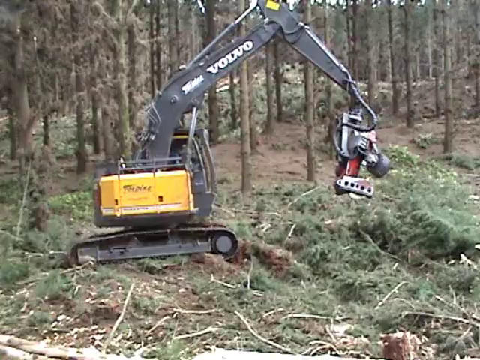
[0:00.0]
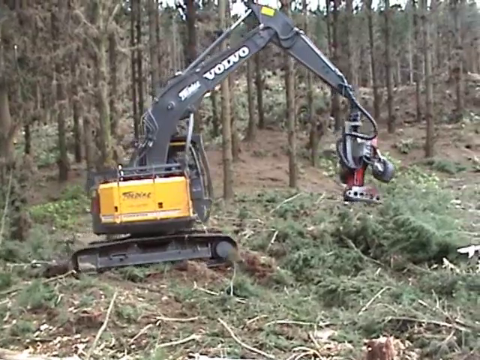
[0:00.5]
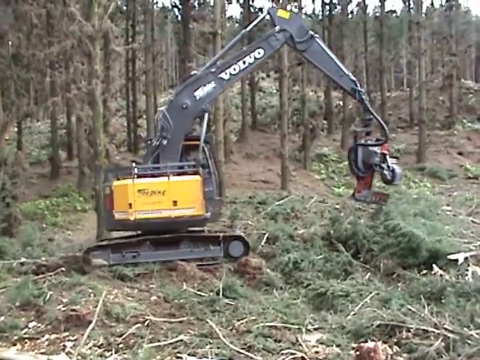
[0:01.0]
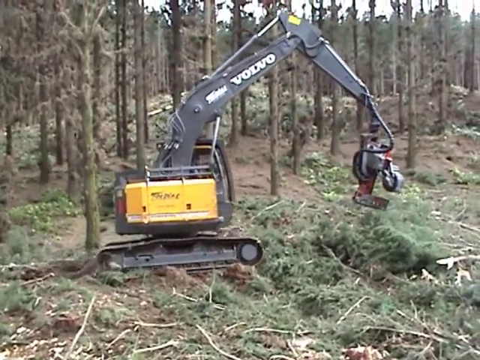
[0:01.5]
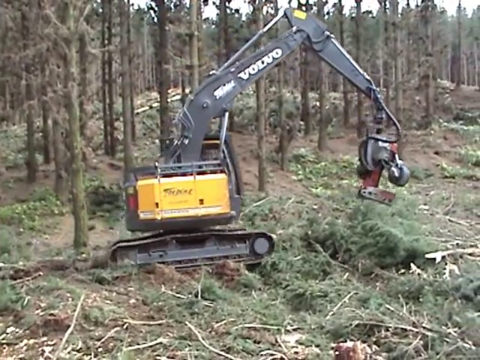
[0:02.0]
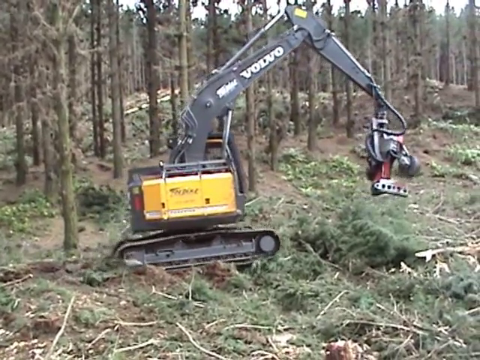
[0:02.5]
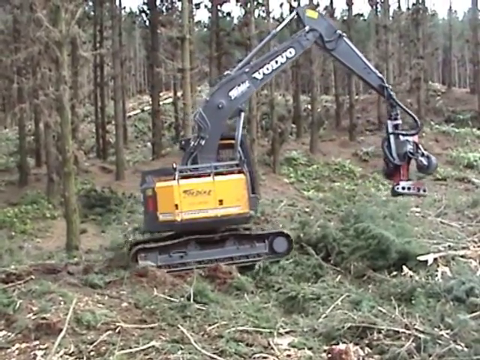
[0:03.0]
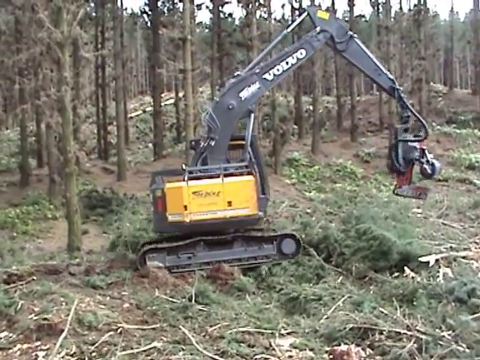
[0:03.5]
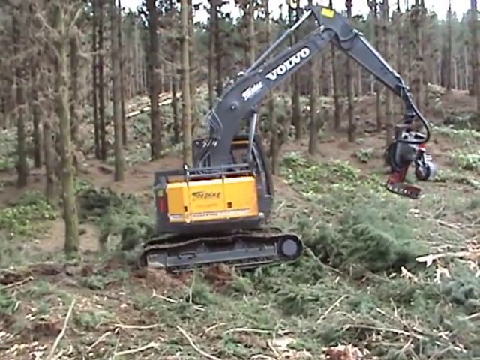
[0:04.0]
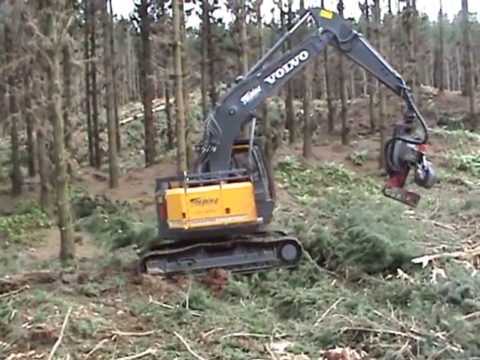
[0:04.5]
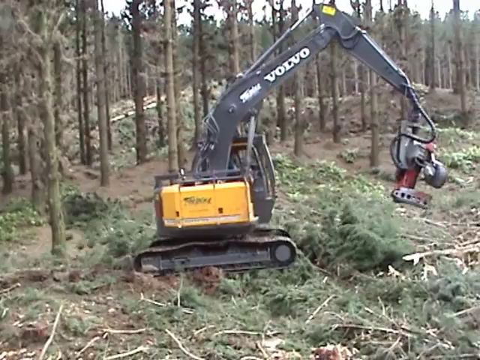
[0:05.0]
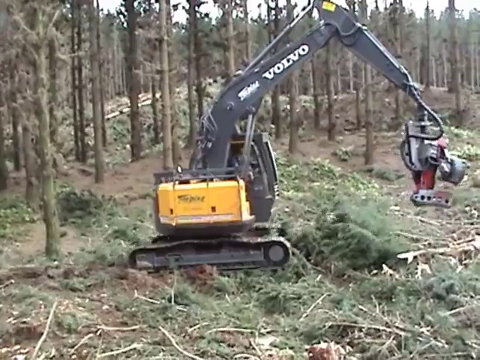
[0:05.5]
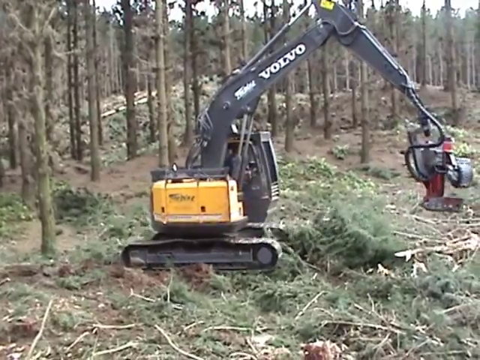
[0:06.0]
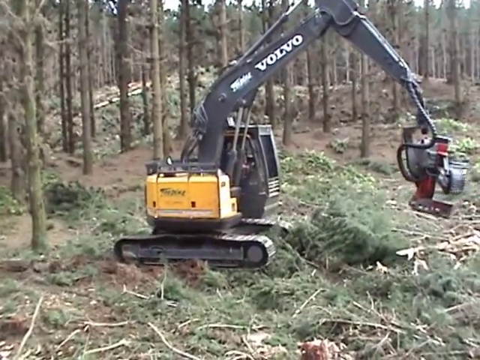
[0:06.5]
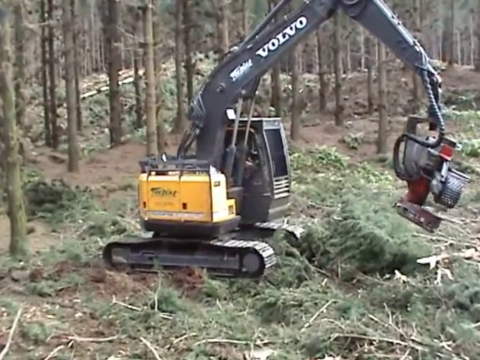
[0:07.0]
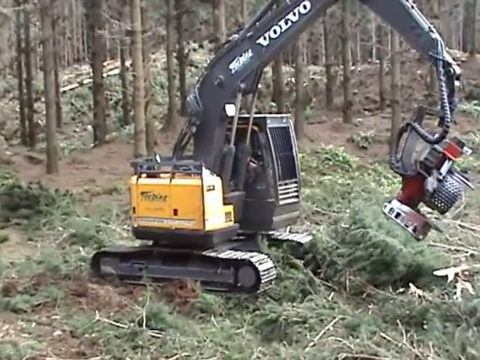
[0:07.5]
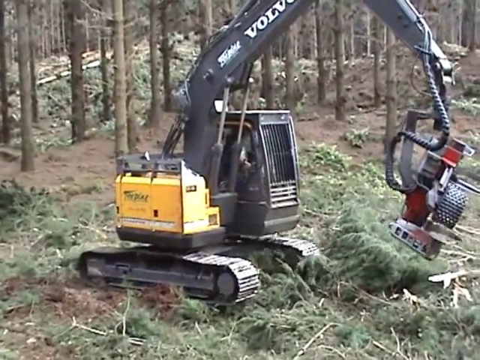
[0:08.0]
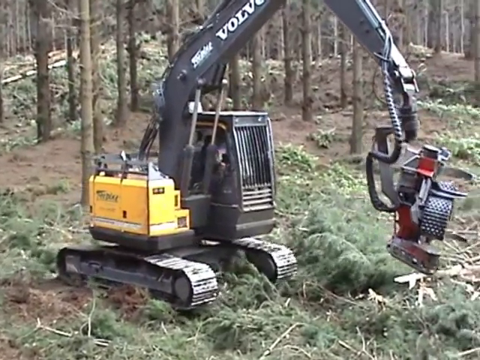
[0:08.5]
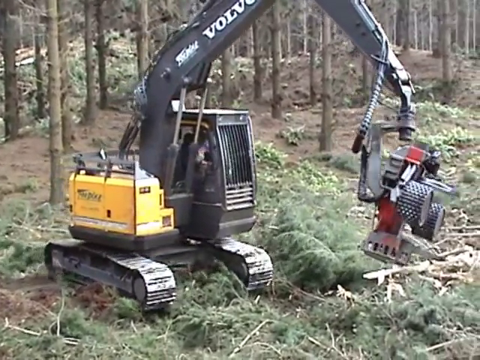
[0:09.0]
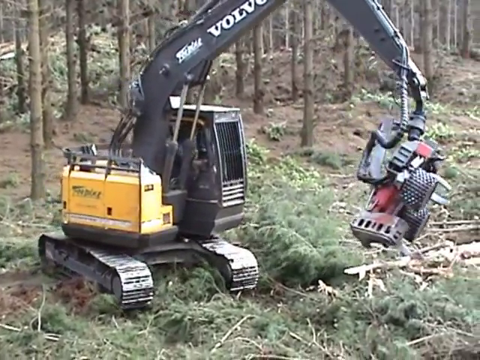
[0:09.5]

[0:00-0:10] A digger or some kind of construction equipment has a strange-looking attachment on the end of its arm, almost like a robot. It seems to have a hydraulic wire attached to it, and it has two metal arms that seem to be studded in some way. The setting is a forest with very tall trees where there has apparently been a lot of deforestation; many fallen branches and twigs are on the floor. A brand name on the arm shows the digger is a Volvo.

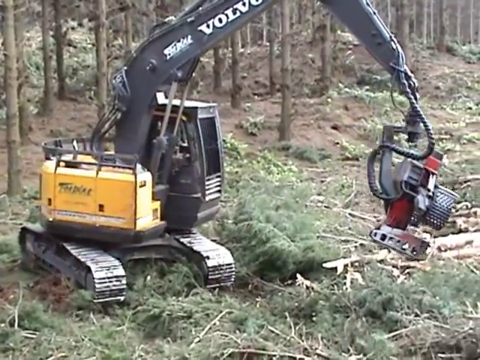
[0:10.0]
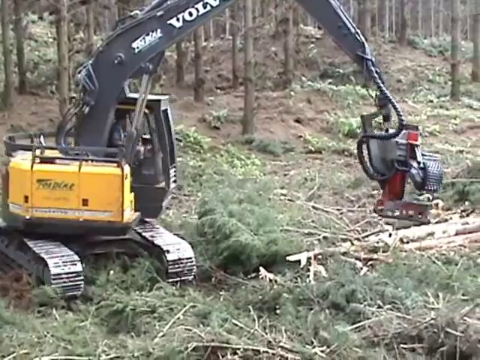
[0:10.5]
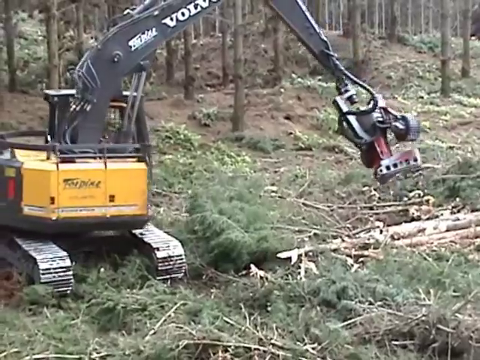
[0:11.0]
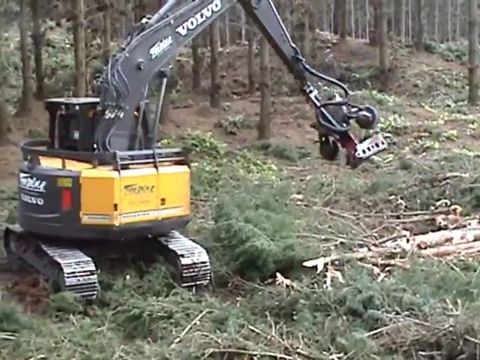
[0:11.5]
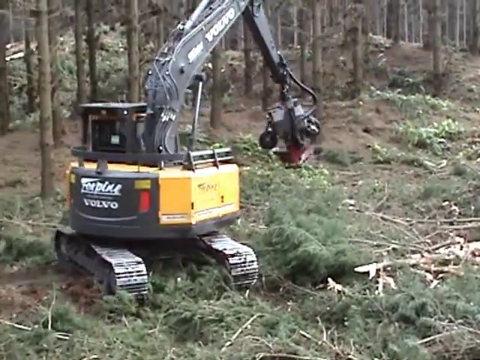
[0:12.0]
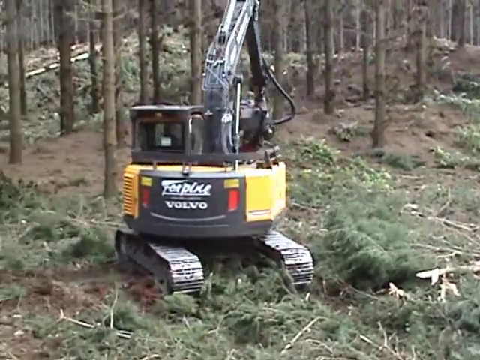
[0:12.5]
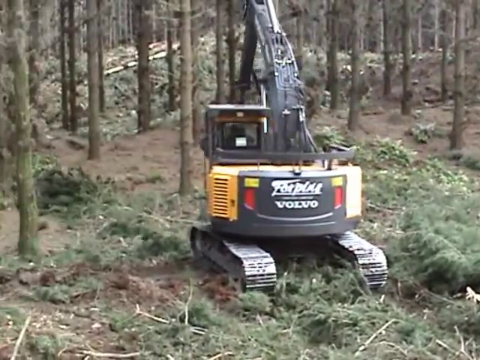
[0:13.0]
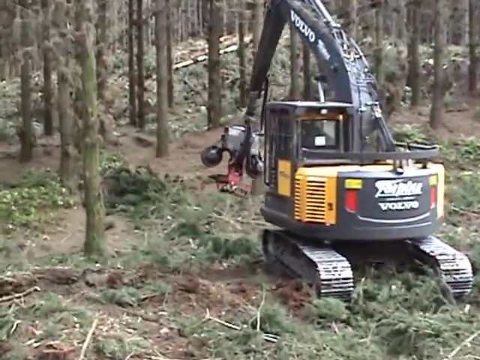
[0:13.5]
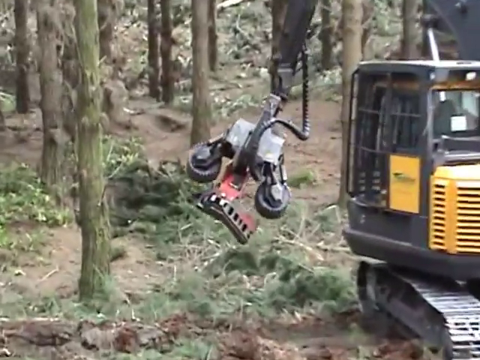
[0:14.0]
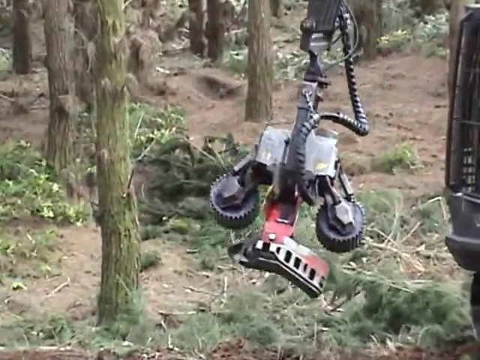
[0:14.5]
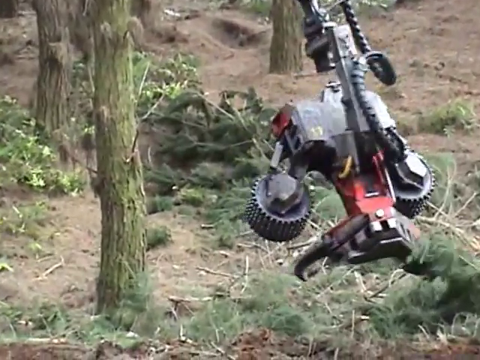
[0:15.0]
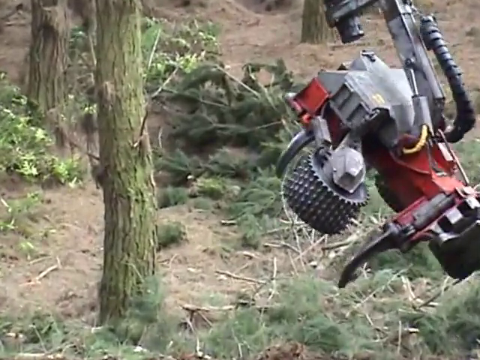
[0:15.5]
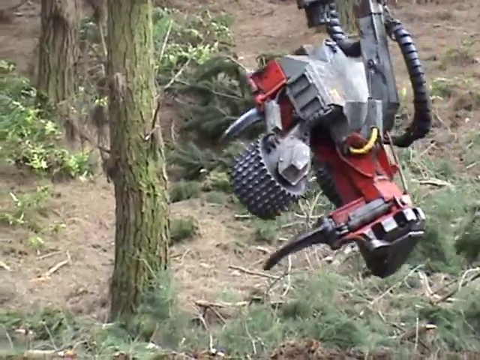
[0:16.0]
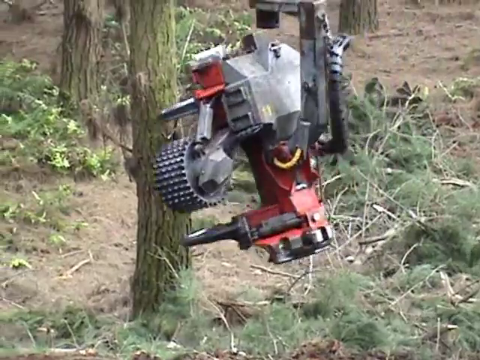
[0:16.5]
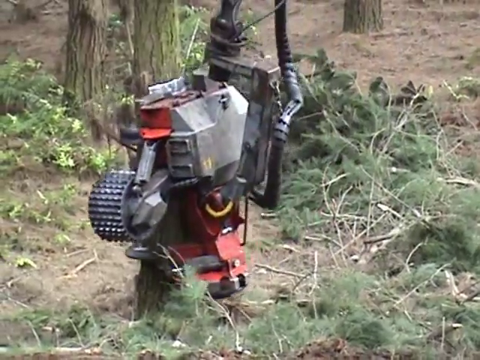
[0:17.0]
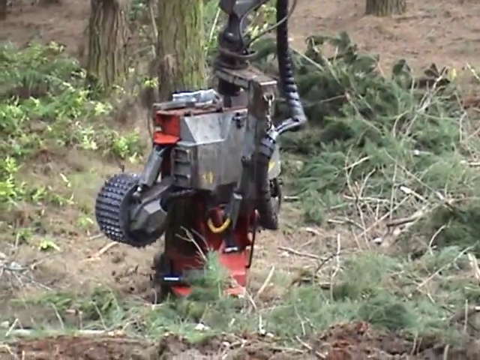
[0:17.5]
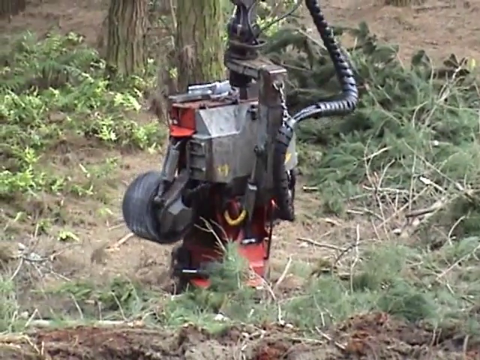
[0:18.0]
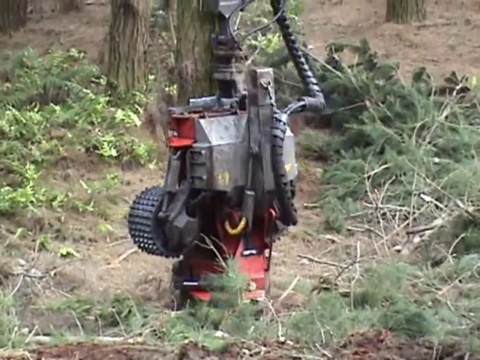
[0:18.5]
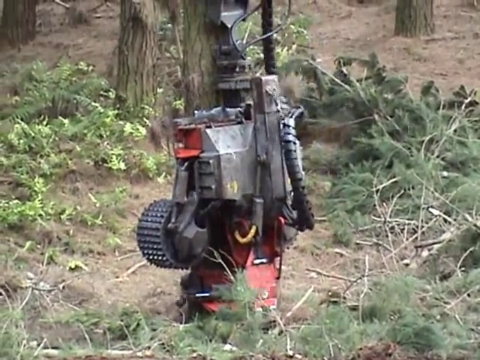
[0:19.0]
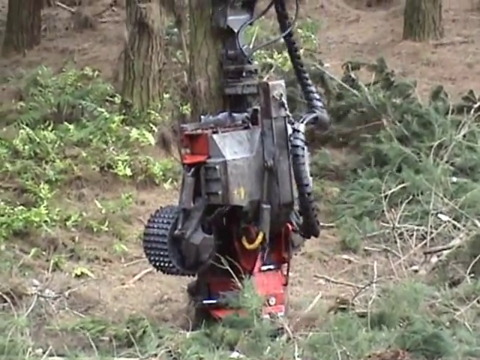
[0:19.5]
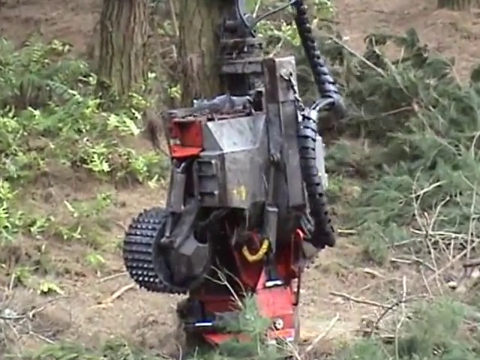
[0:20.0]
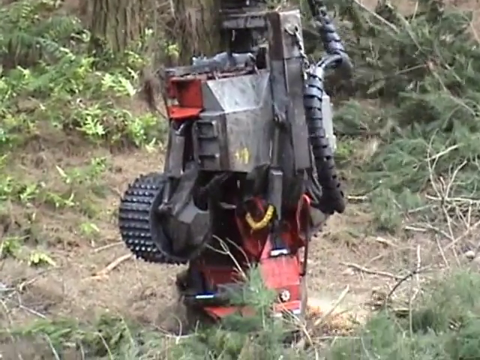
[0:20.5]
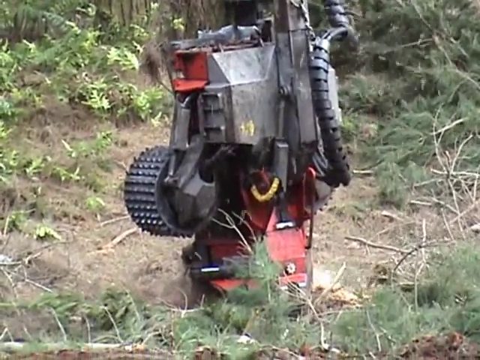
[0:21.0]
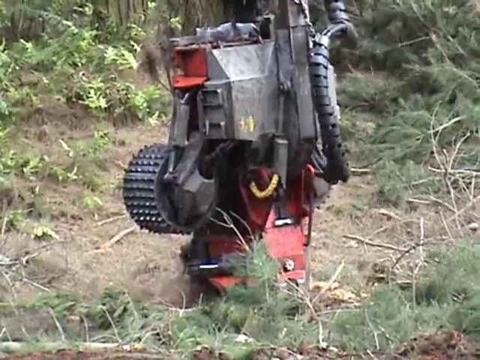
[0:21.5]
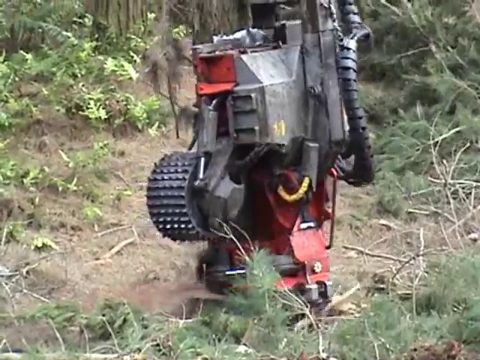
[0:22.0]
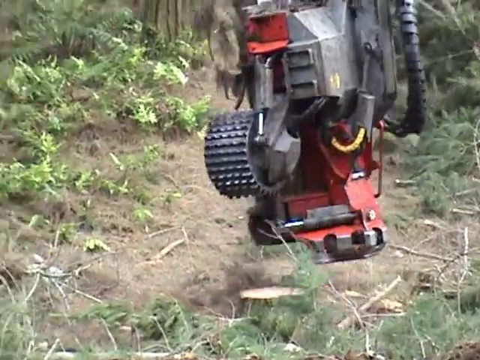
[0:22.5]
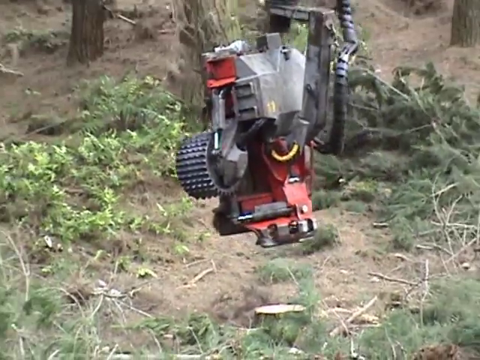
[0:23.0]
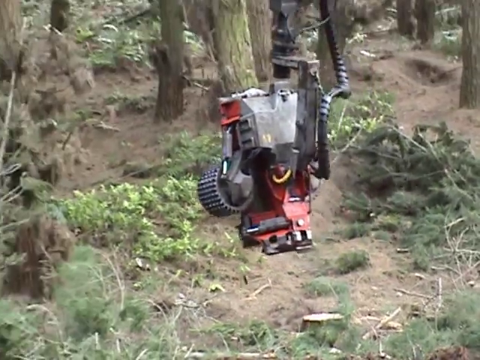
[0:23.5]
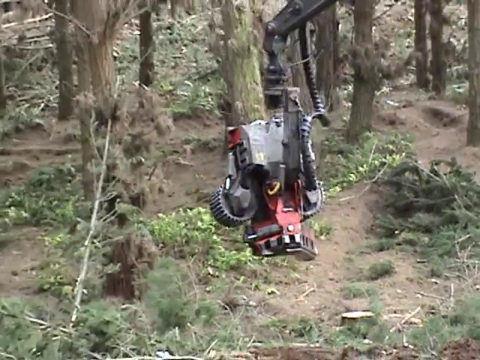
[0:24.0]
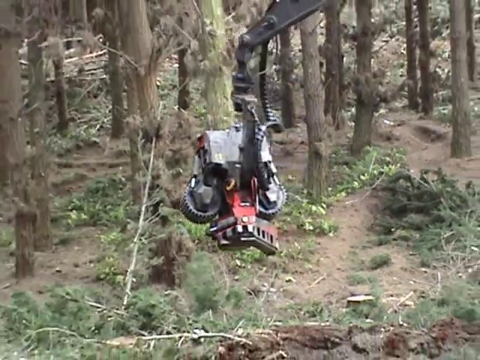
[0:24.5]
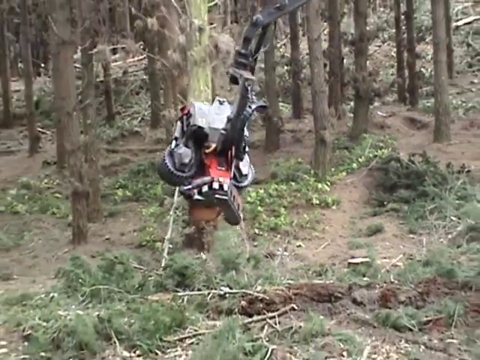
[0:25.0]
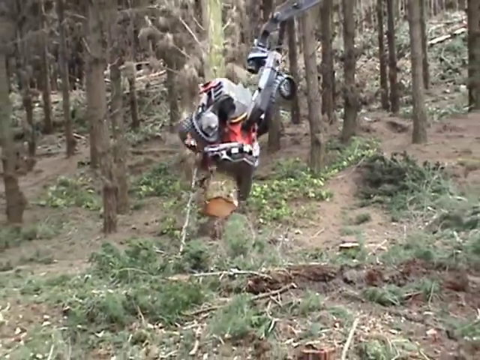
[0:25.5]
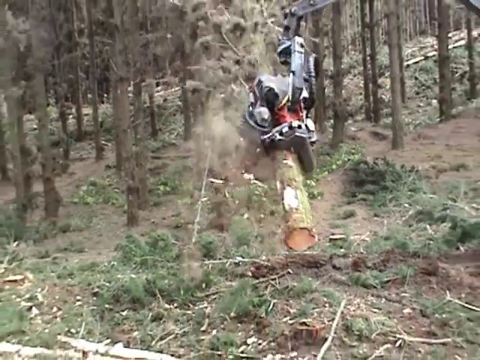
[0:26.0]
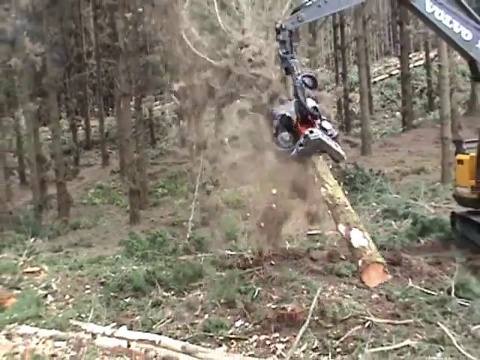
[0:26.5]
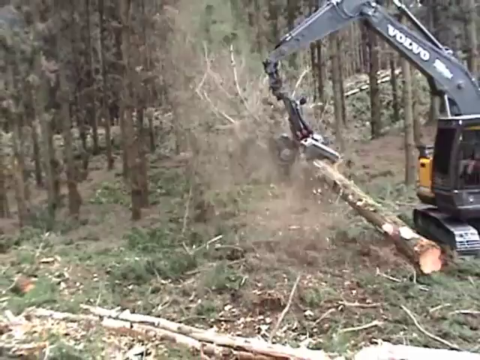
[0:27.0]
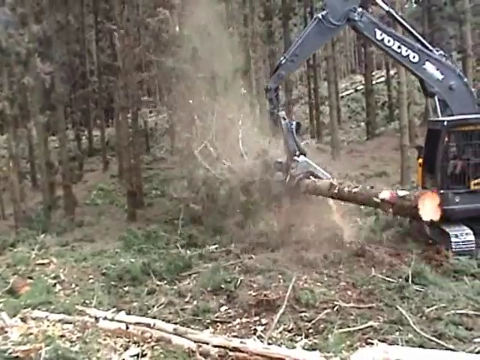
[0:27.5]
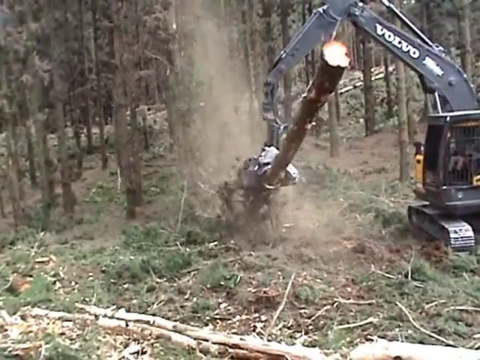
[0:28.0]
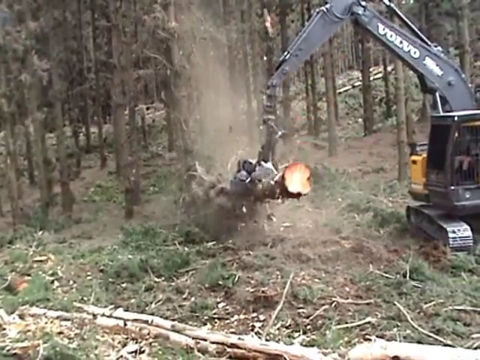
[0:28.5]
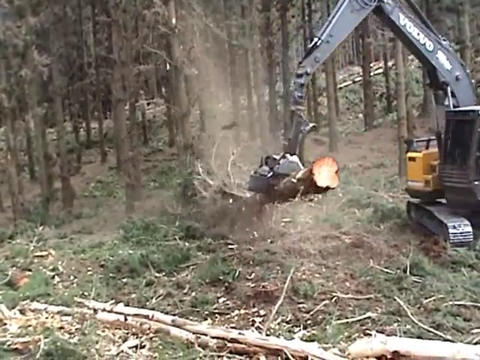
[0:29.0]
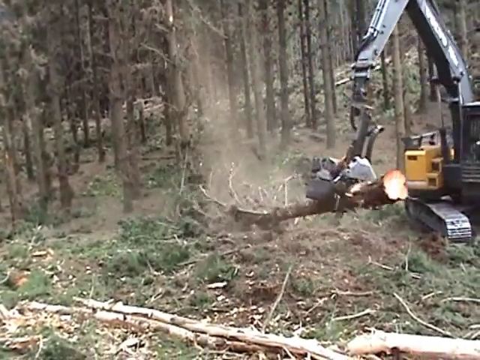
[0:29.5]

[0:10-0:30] The robot-like attachment at the bottom of the digger arm swings toward the base of a tree and seems to slice through it, though how it does this is not clear, completely severing the tree from its base. It then lifts the tree up and slides over it so that the tree seems to fall through its grip, stripping off small branches and twigs. The way it swings looks very strange, as if the physics are off. The material coming off the tree, possibly moss or small leaves, falls away in a dust cloud as the tree is lifted and slips through the attachment's grip. The tree then falls to the ground, still in the attachment's grip.